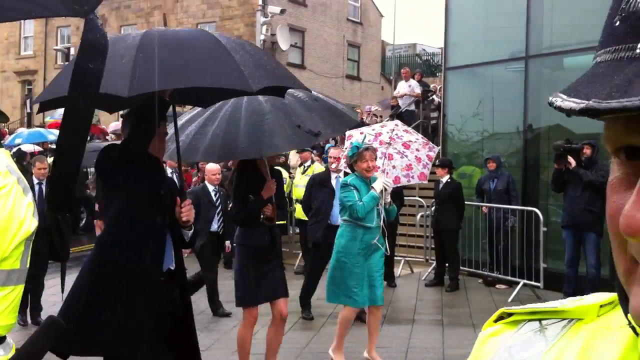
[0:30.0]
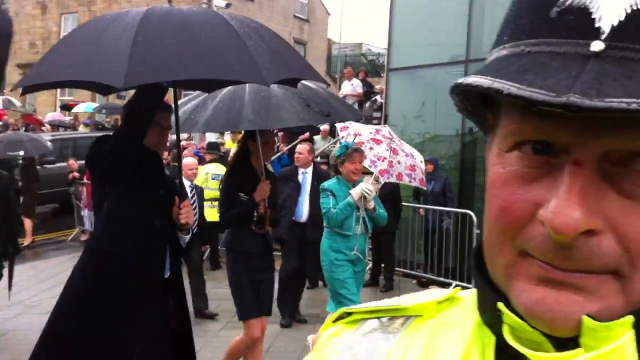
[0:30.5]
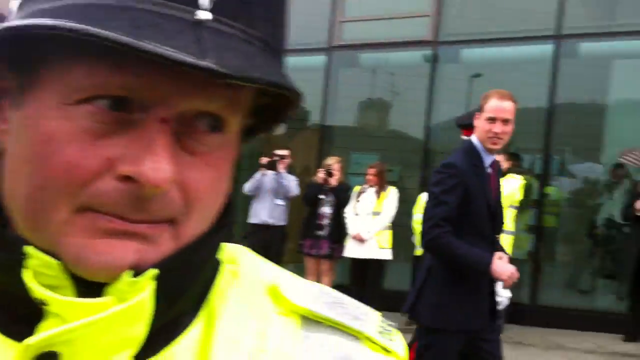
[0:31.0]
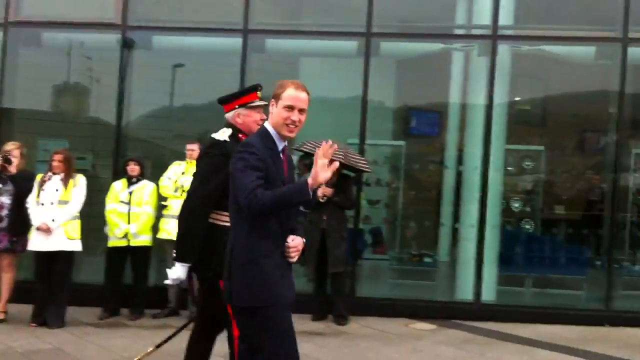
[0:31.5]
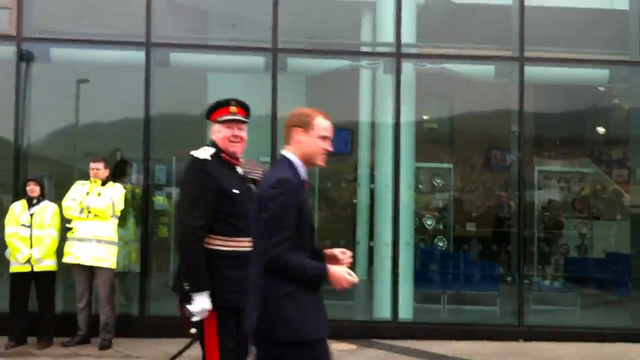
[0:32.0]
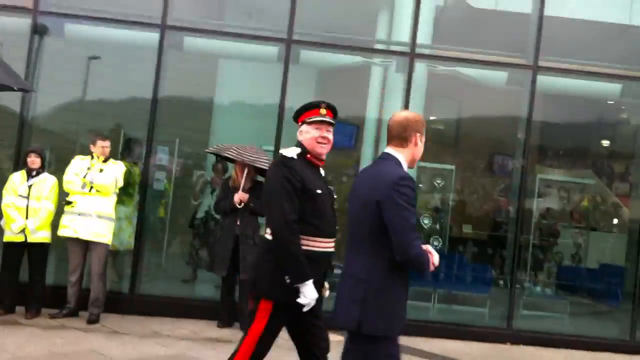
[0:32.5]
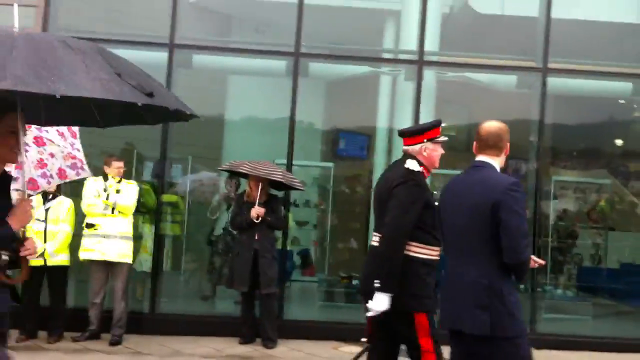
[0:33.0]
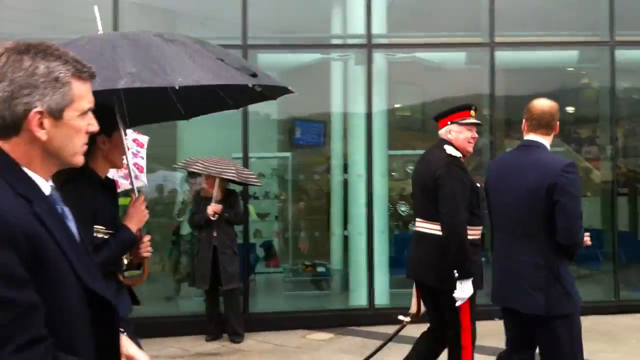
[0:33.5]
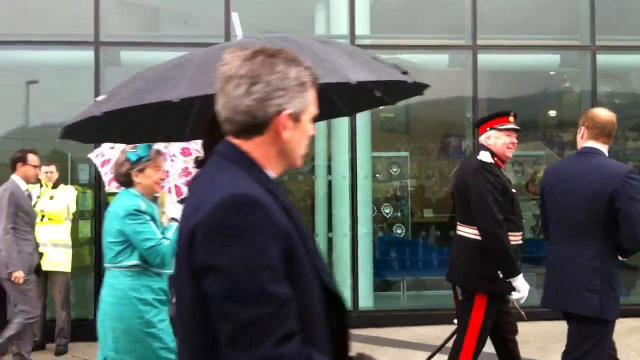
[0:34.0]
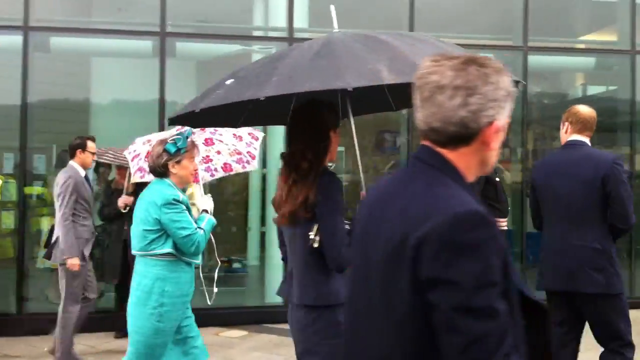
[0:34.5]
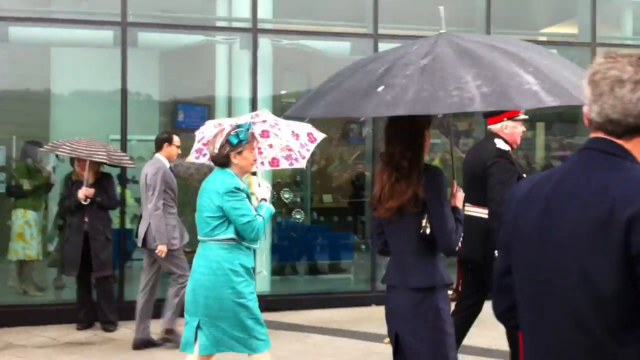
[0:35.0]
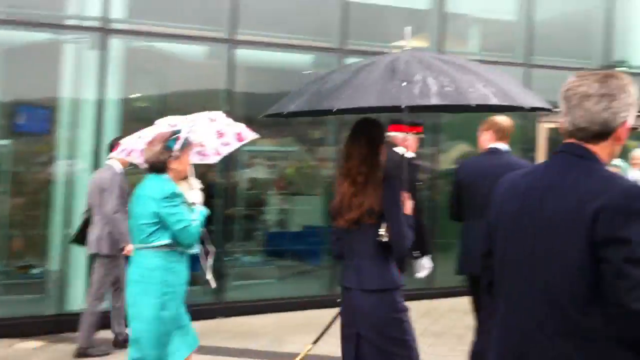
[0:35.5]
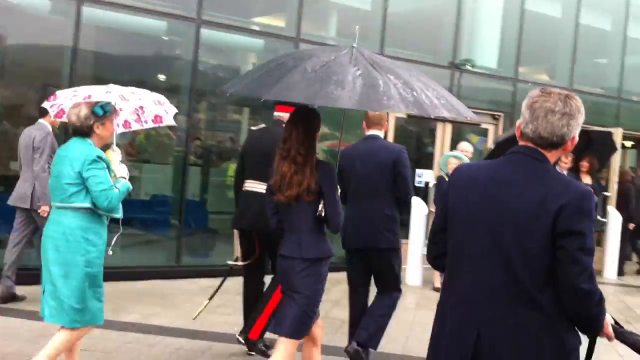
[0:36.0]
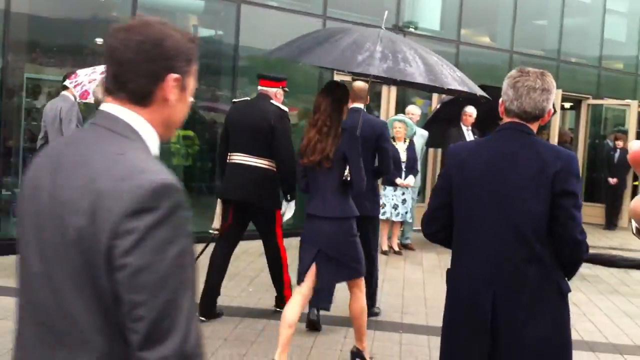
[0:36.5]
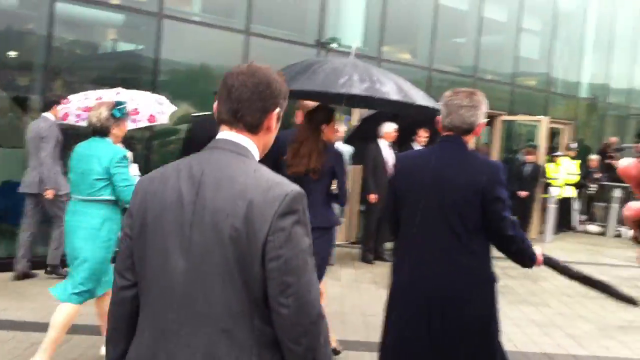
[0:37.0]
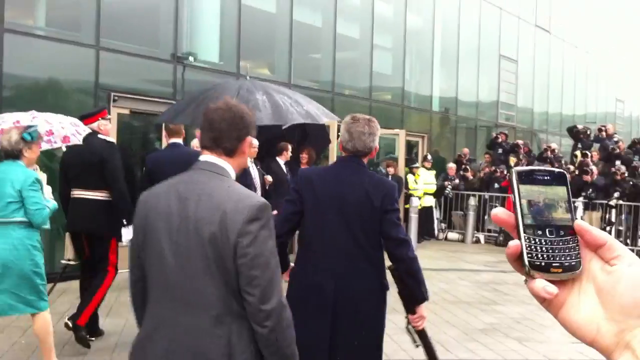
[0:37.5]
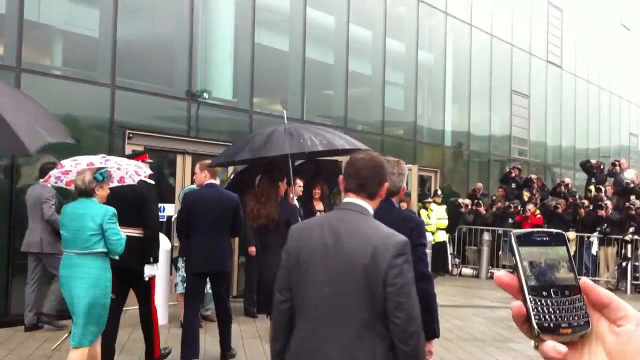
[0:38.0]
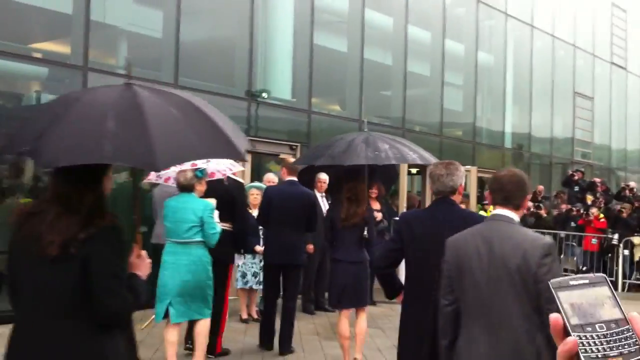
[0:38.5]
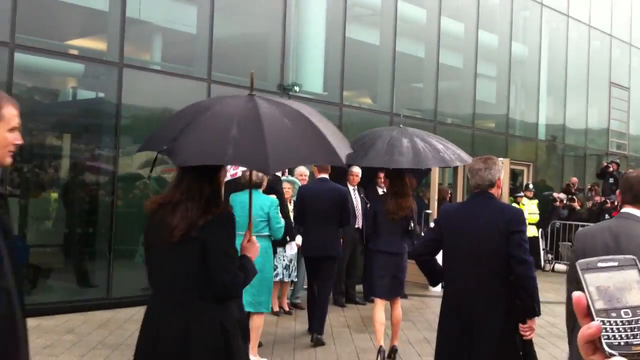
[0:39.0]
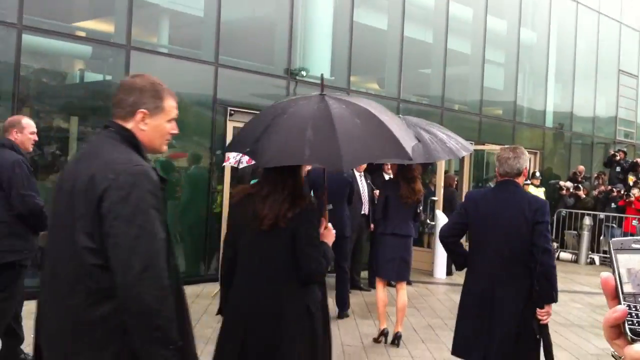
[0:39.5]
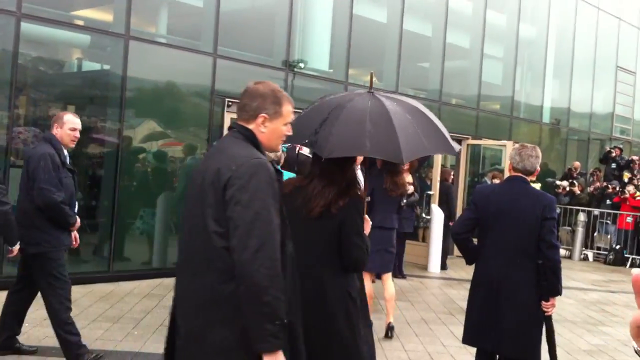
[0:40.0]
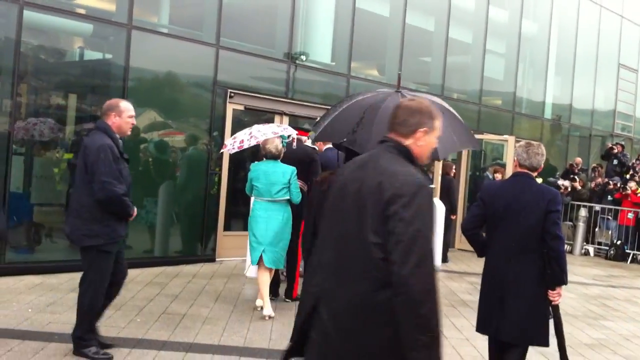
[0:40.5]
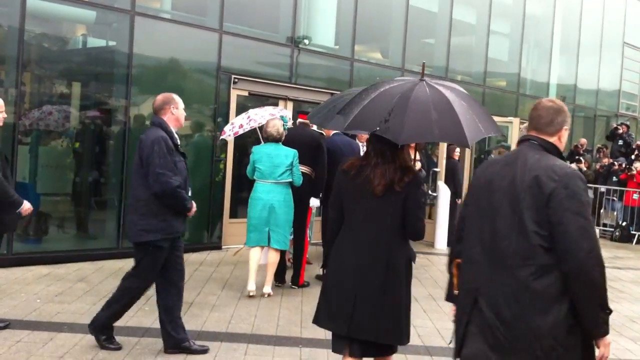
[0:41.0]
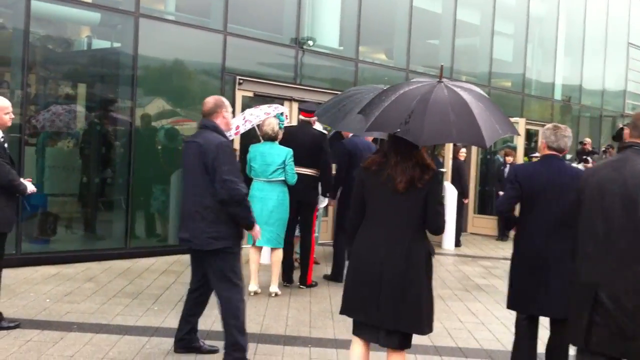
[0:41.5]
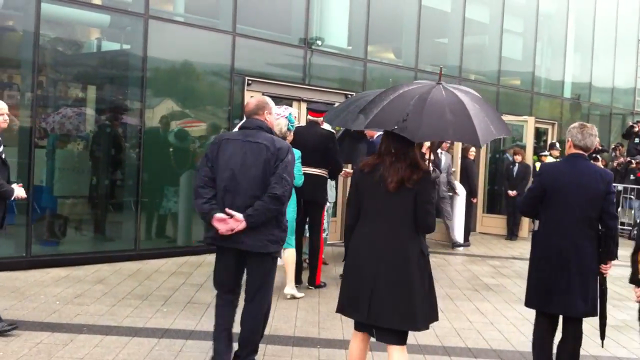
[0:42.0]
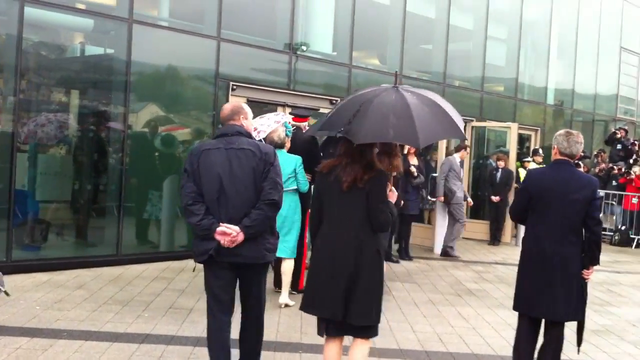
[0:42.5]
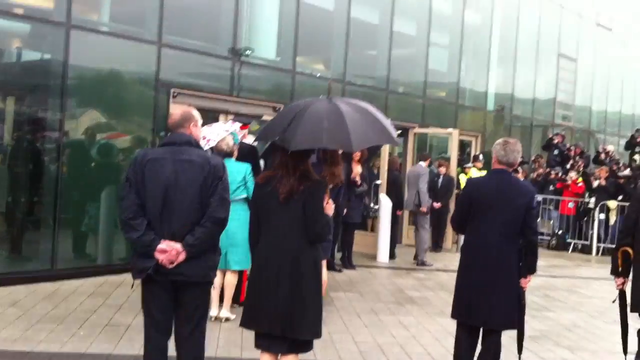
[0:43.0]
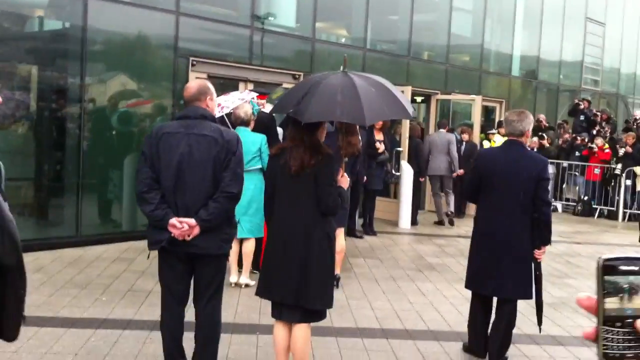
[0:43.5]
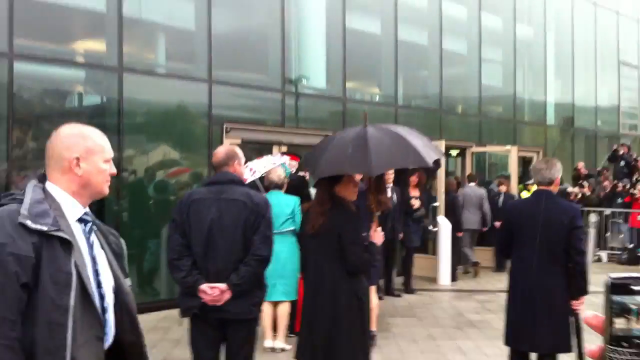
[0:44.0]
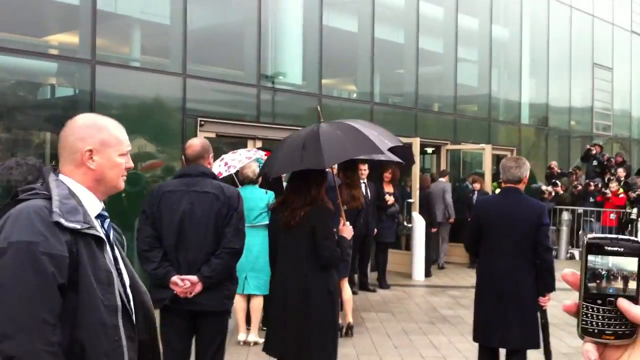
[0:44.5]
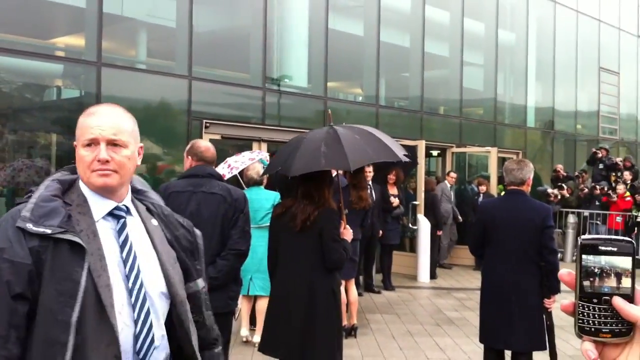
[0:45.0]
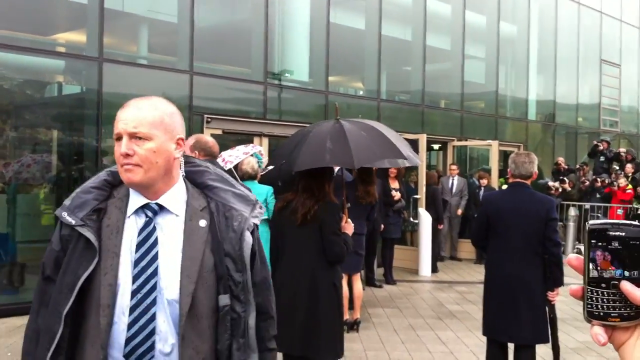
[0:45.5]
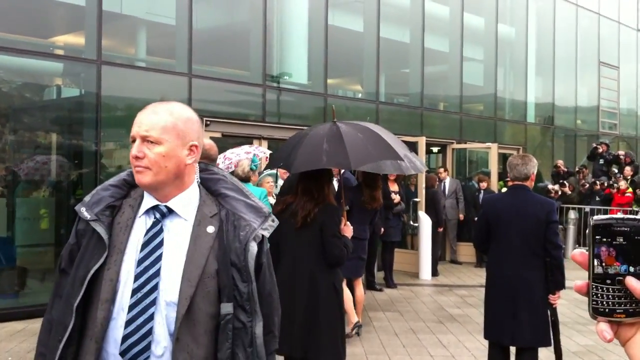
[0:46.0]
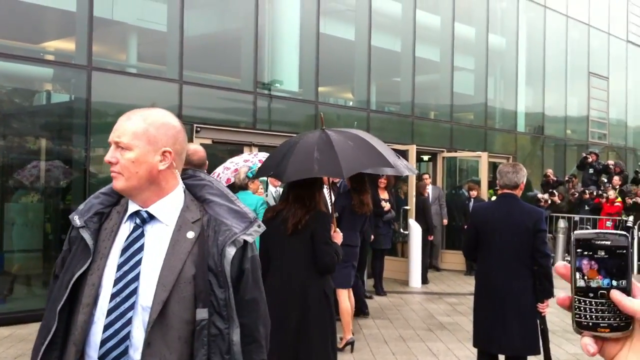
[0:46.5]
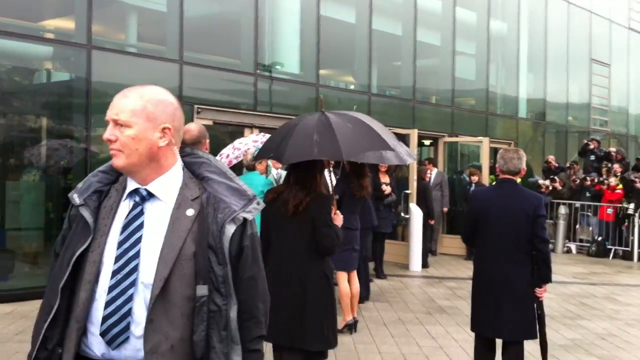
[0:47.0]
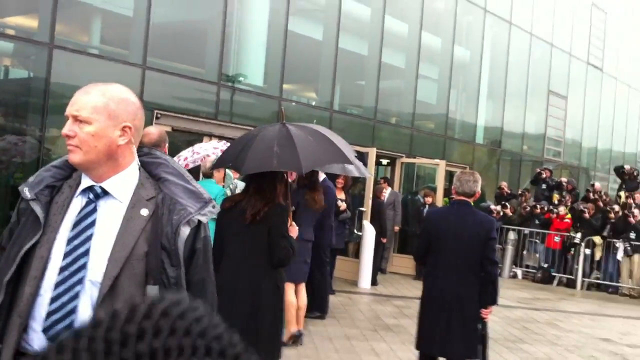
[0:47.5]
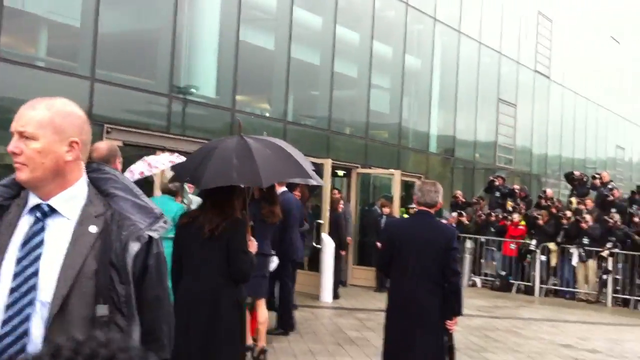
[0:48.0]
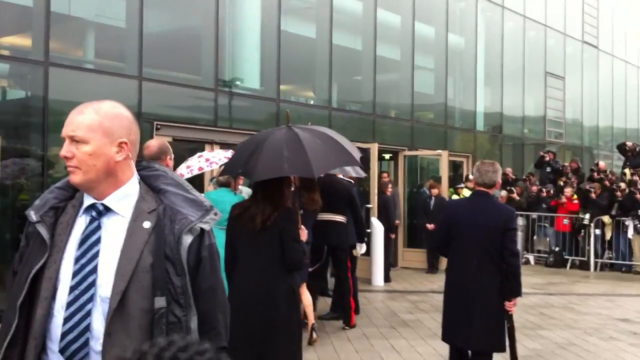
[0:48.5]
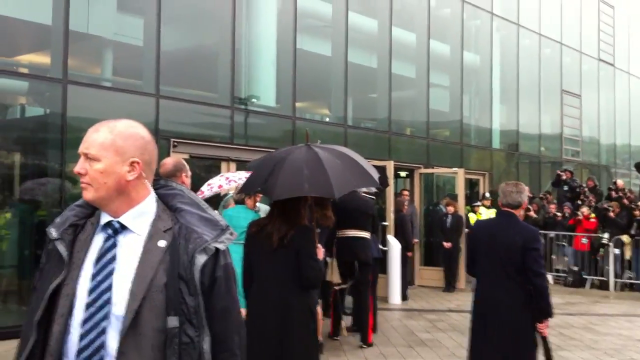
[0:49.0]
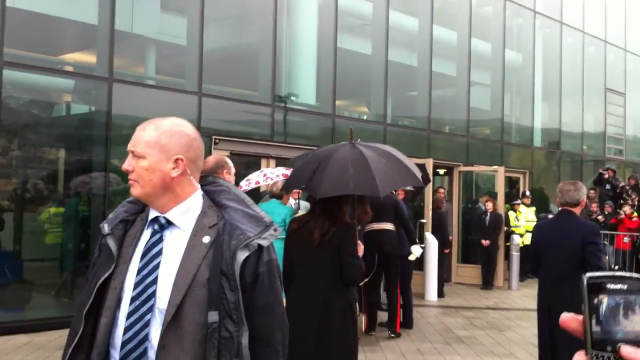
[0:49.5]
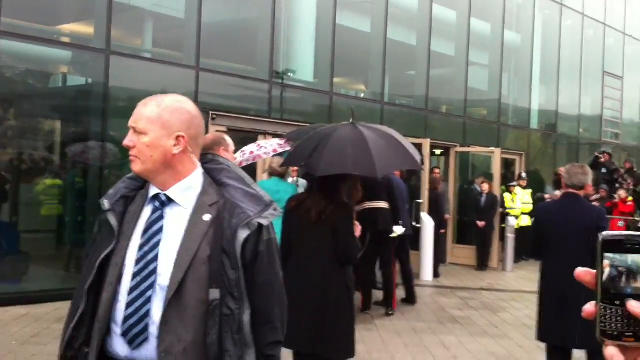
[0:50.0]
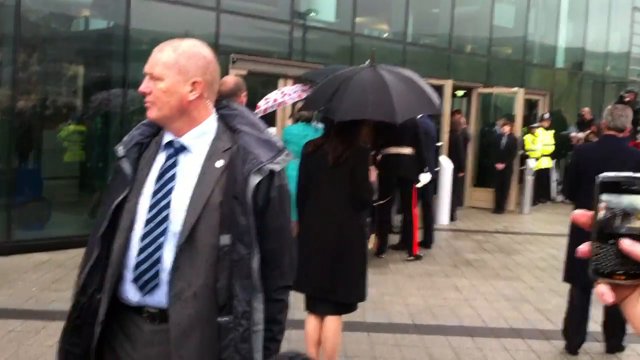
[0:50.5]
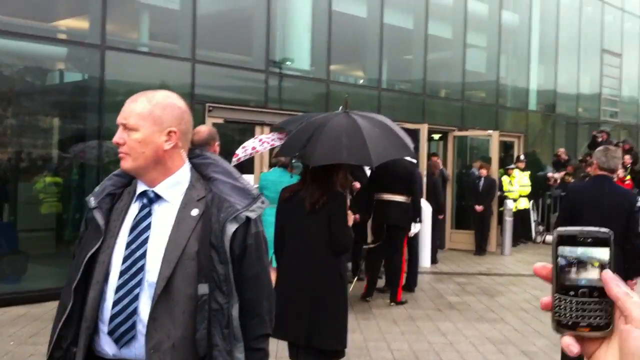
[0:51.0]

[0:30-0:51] Catherine, Princess of Wales, walks holding a black umbrella. She wears a purple coloured dress and stands next to a lady in a turquoise dress who is also holding an umbrella. It is a rainy day, so most people have umbrellas. At the very front of the shot, kind of obscuring the view, is a police officer, and then the camera pans around to show the Prince of Wales. He walks next to somebody in a high-ranking military uniform, black, with a hat with a red stripe on it and a few medals. They walk past glass-fronted buildings with people in high-vis stood outside, and the group walks towards the glass-fronted buildings. Lots of people with phones are standing around, kind of escorting them. There is lots of security, apparently bodyguards with earpieces in, and lots of police about. Lots of members of the public stand behind metal barriers watching, using their phones to record them, with umbrellas. The shot finishes on the backs of the important people and the prince and princess, and the front of a bodyguard with a shaved head wearing a grey suit with a blue striped tie, a coat and an earpiece. Somebody appears to have a BlackBerry device in their hand and is recording what is going on.